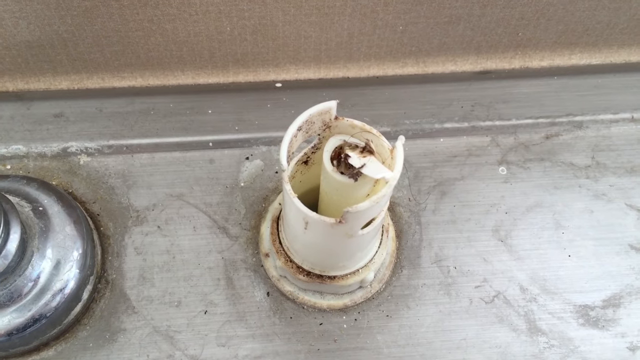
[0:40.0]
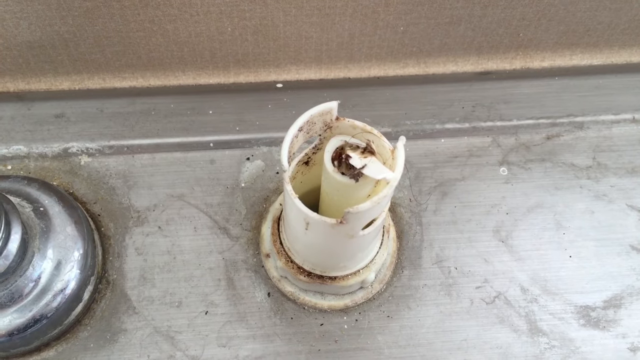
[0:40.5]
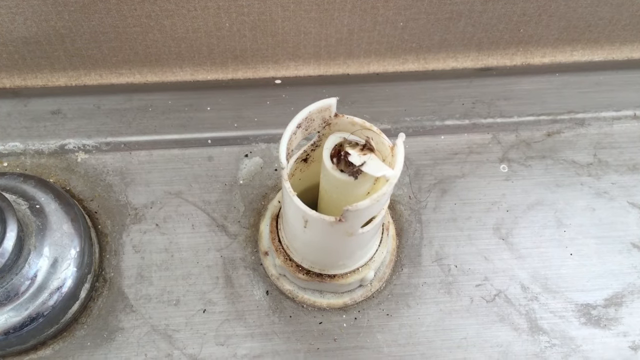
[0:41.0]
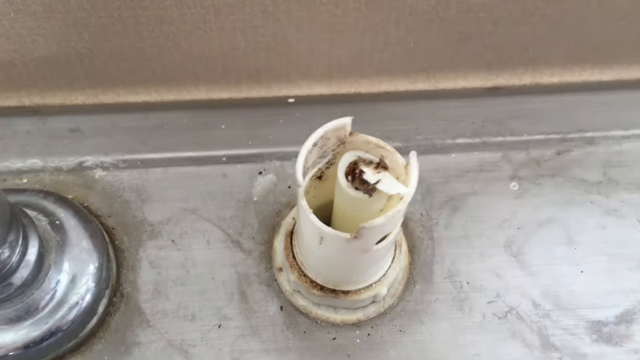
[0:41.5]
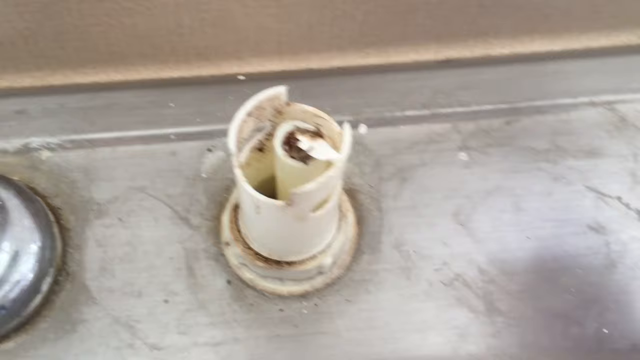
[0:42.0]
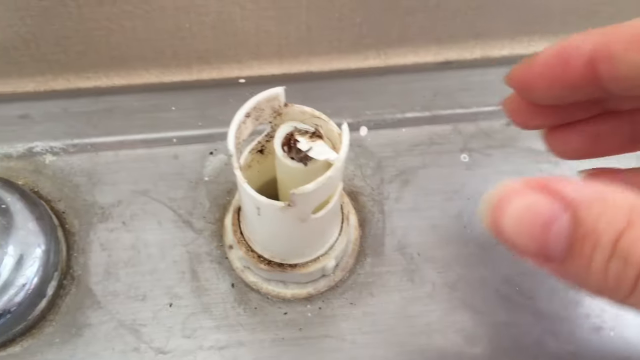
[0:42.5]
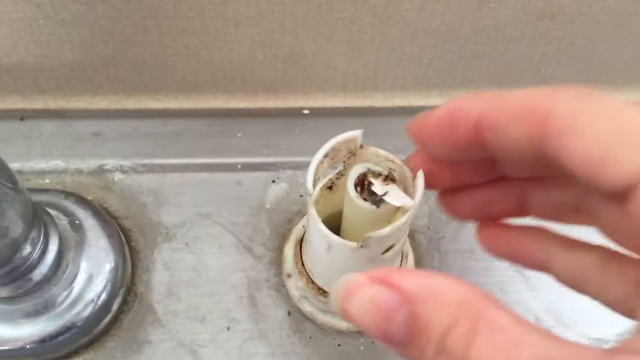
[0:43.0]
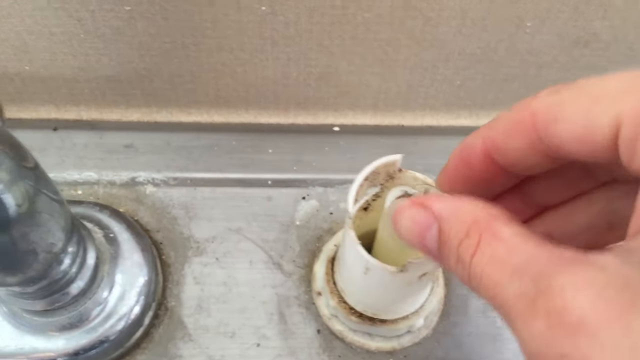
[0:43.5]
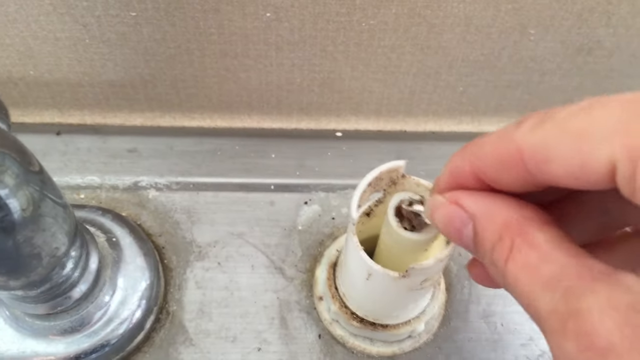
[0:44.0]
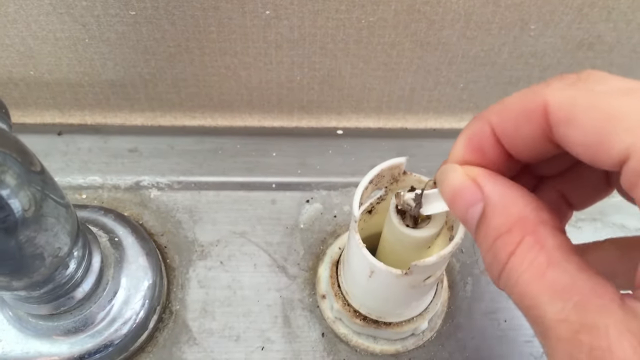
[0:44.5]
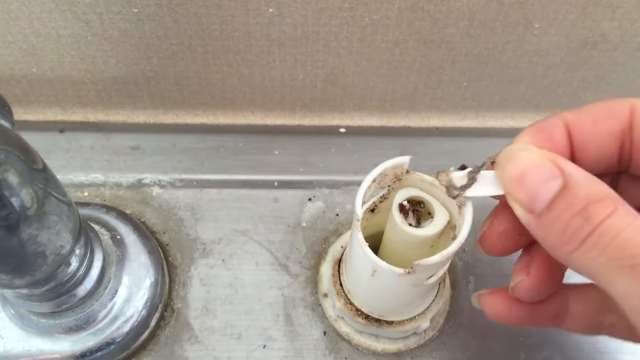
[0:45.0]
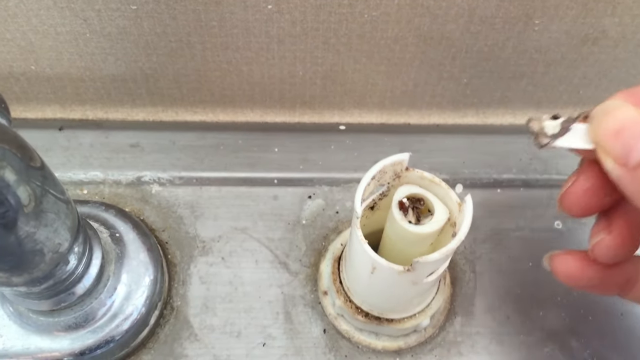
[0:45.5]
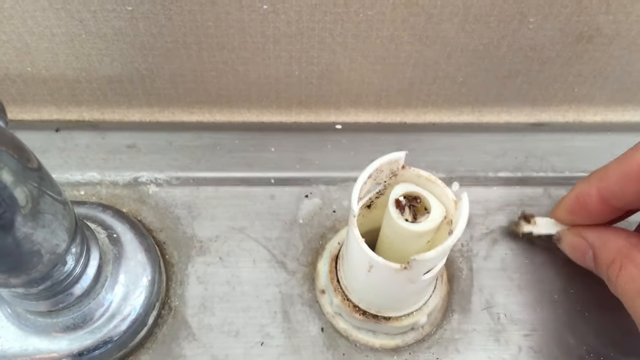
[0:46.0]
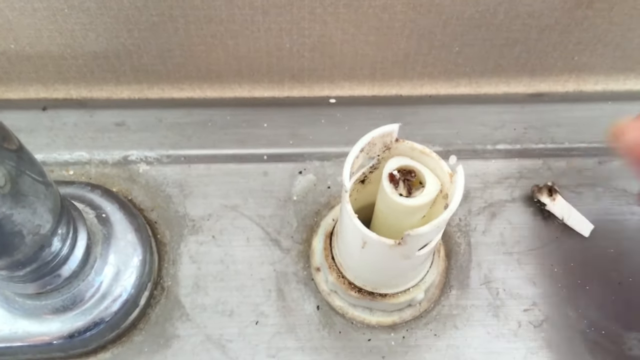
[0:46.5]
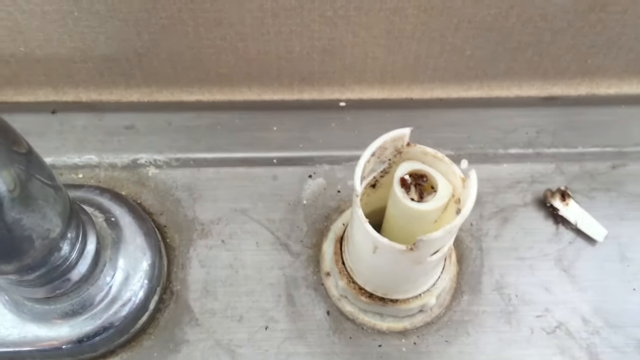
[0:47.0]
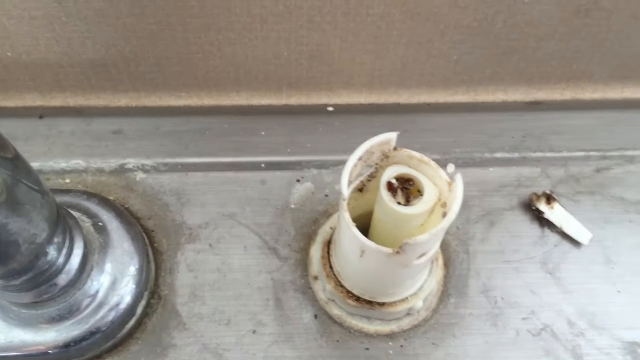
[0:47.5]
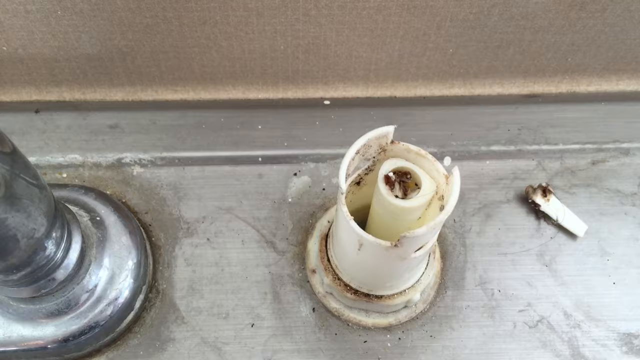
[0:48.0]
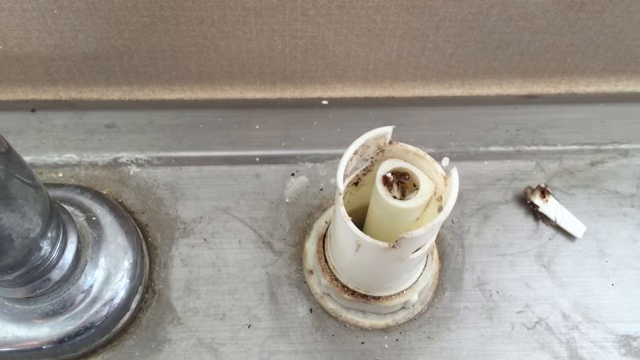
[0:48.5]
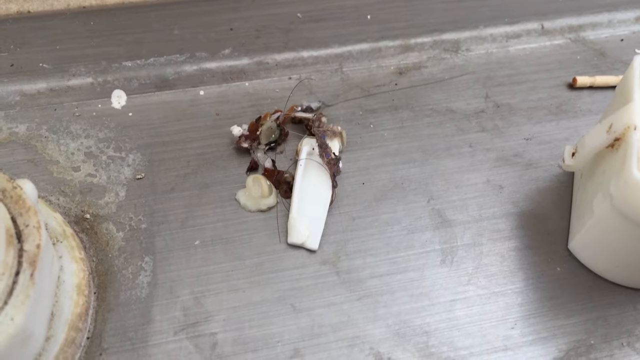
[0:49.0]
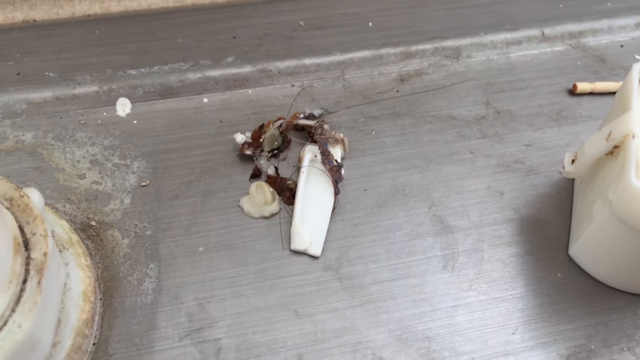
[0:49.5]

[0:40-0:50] An overhead view shows the upper part of the stainless steel sink and the tube and valve running along the right side of the sink, where the cap has been removed. It is clogged with some sort of gunk and debris. The camera focuses on this area from overhead and sort of shakes around a bit, as it is held in the person's left hand. The right hand and fingers come into view from the right side of the screen and slowly reach over to the pipe. The index finger and thumb reach toward some gunk and a white piece of what appears to be plastic sticking up out of the center tube and lift it out; it appears to carry some spider webs and other gunk. The piece is then placed down beside the pipe on the right side using the fingertips and thumb.